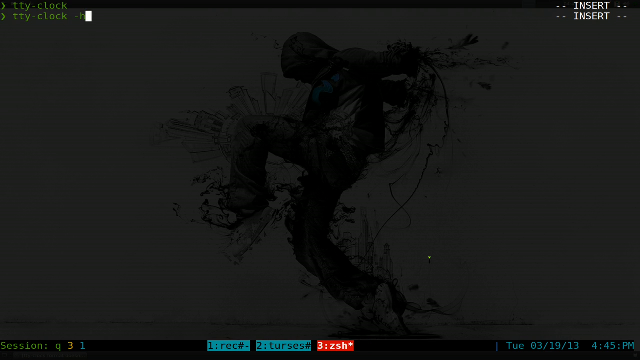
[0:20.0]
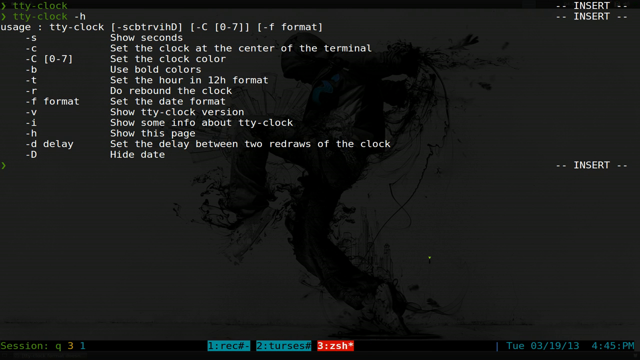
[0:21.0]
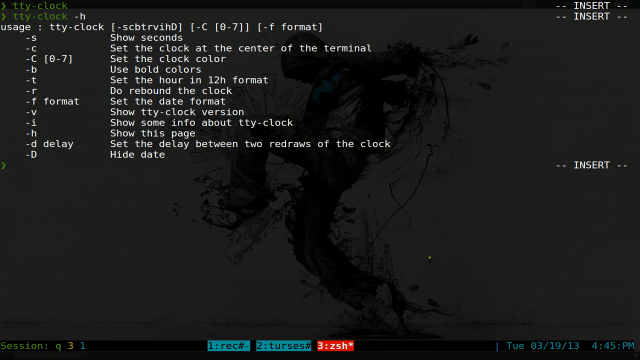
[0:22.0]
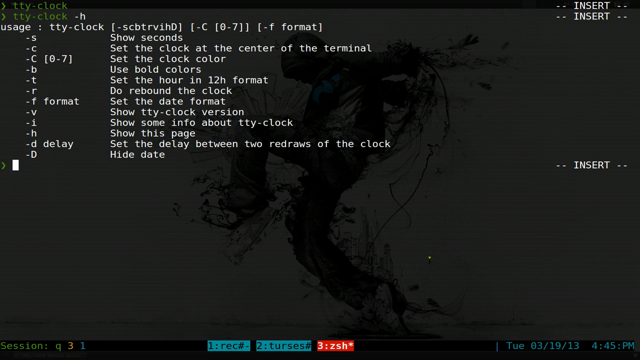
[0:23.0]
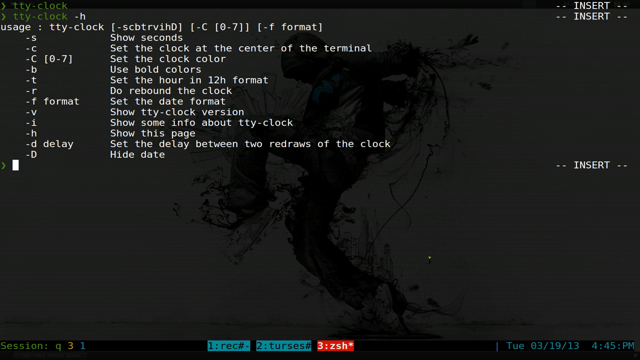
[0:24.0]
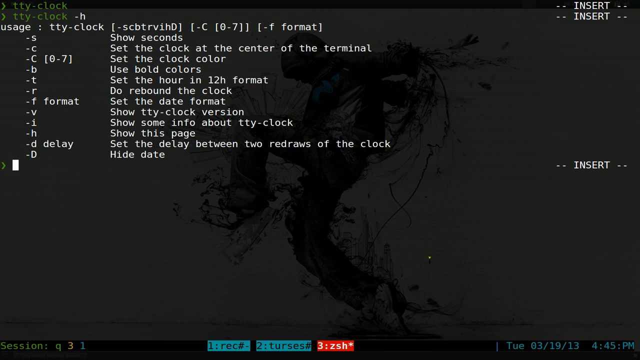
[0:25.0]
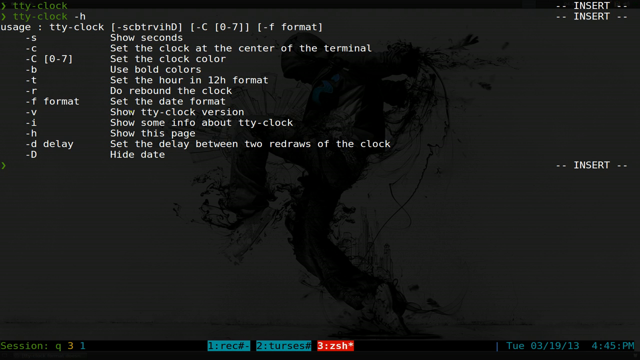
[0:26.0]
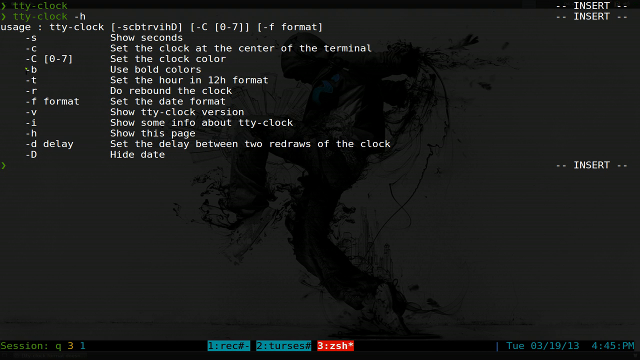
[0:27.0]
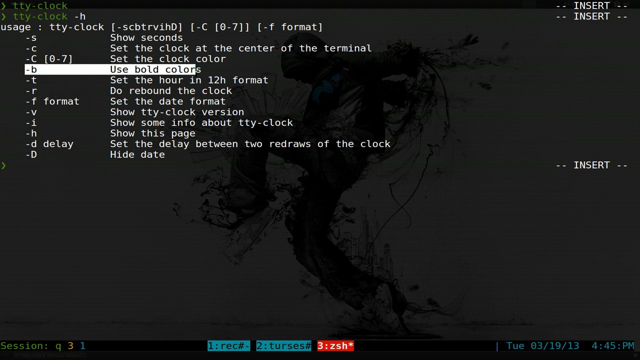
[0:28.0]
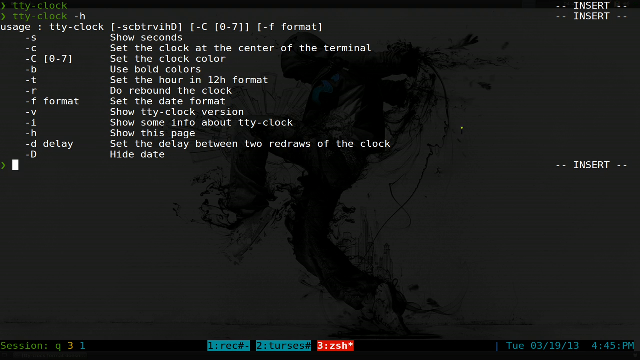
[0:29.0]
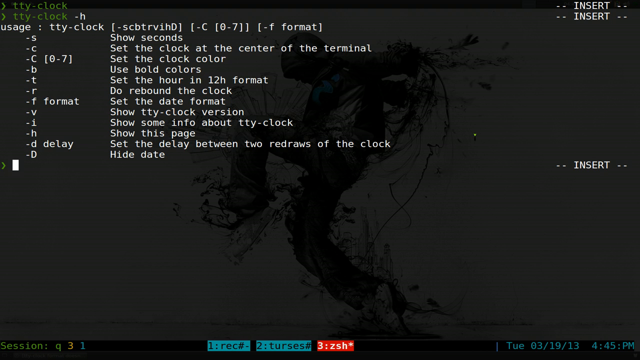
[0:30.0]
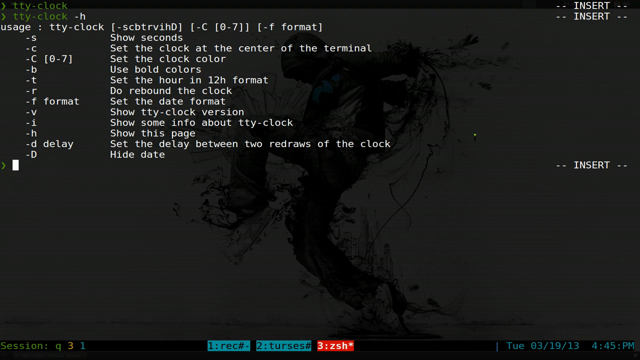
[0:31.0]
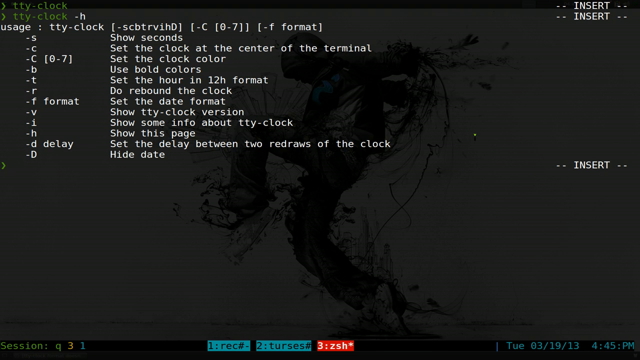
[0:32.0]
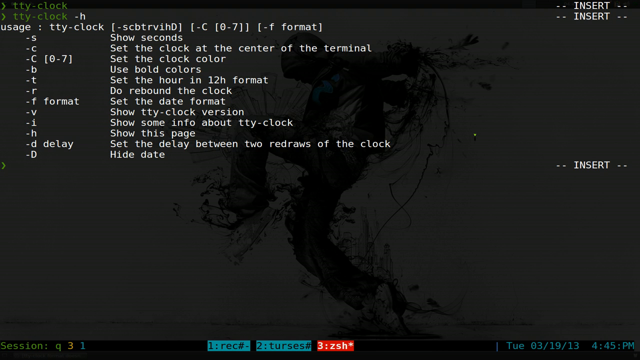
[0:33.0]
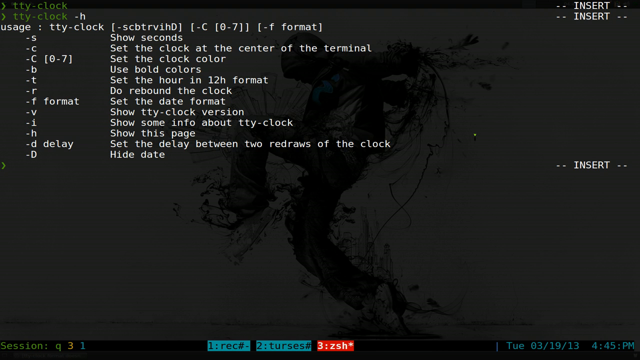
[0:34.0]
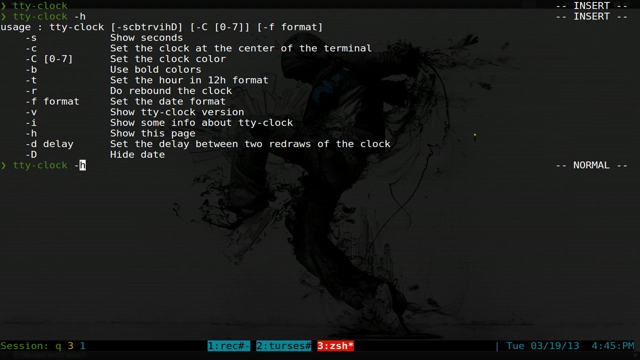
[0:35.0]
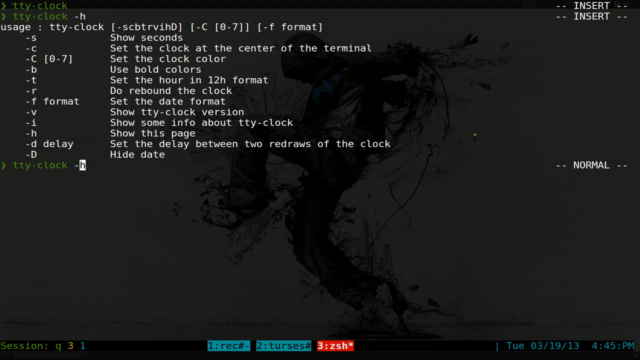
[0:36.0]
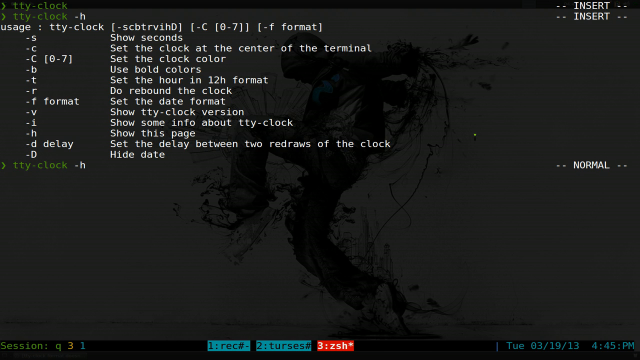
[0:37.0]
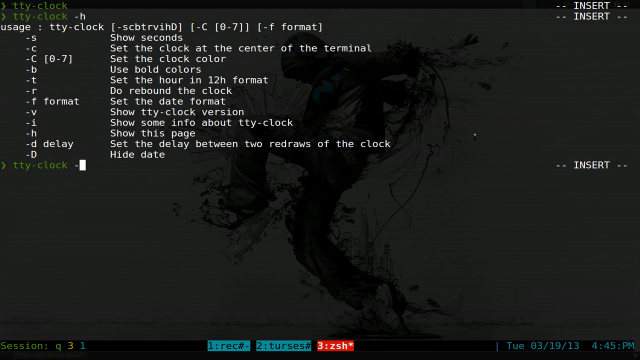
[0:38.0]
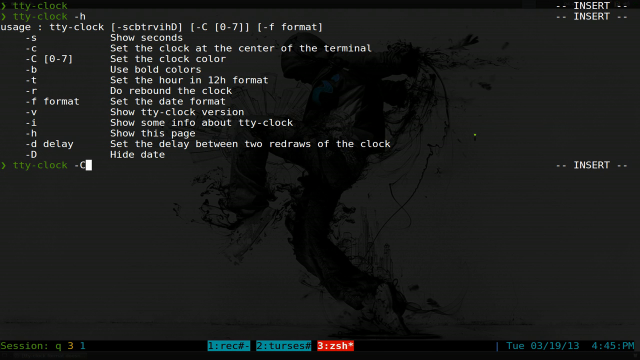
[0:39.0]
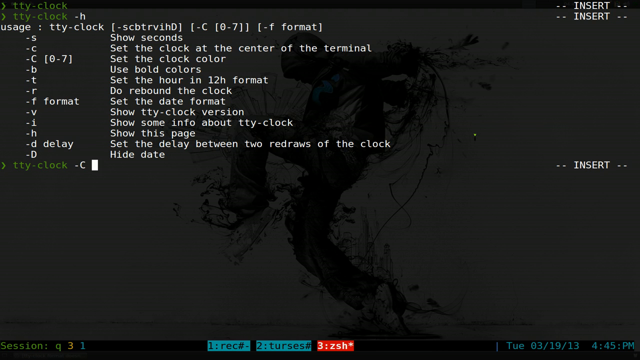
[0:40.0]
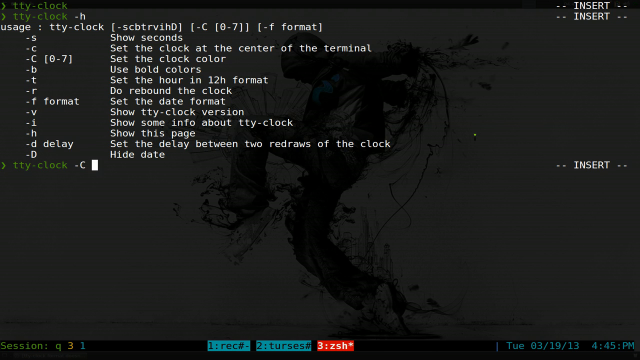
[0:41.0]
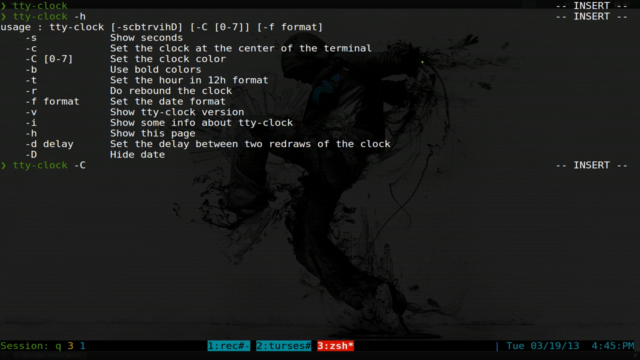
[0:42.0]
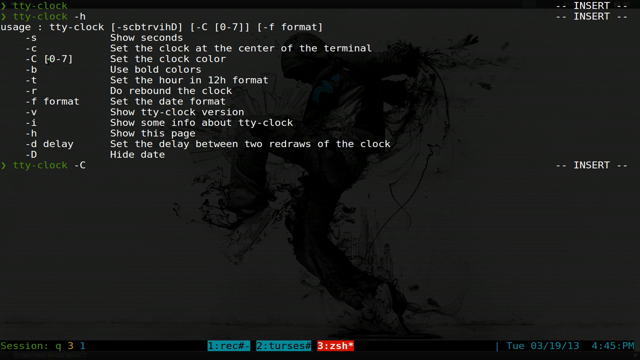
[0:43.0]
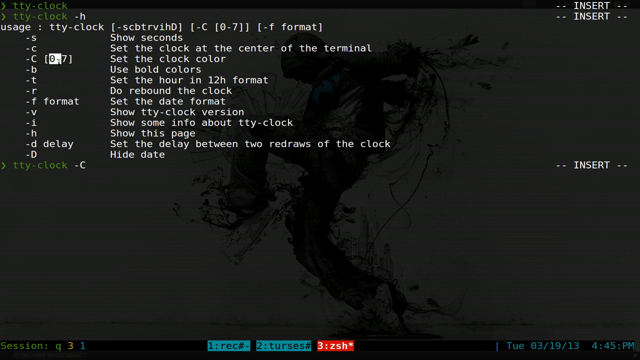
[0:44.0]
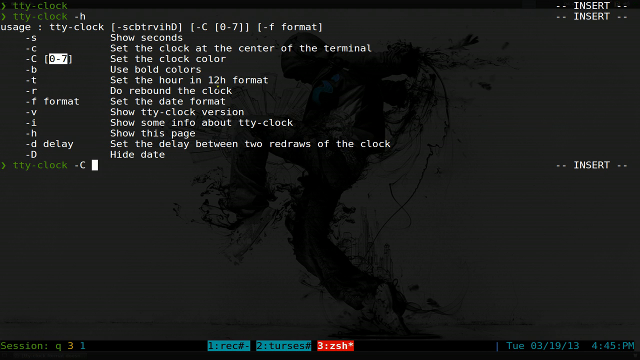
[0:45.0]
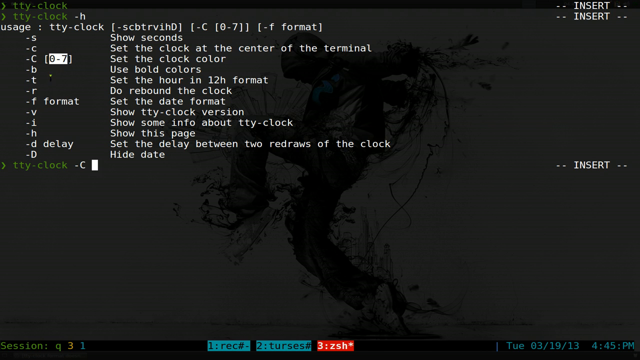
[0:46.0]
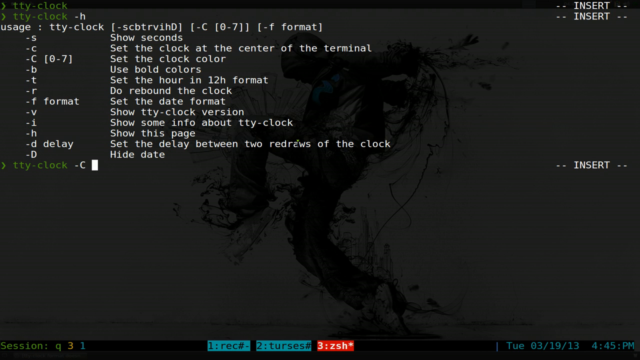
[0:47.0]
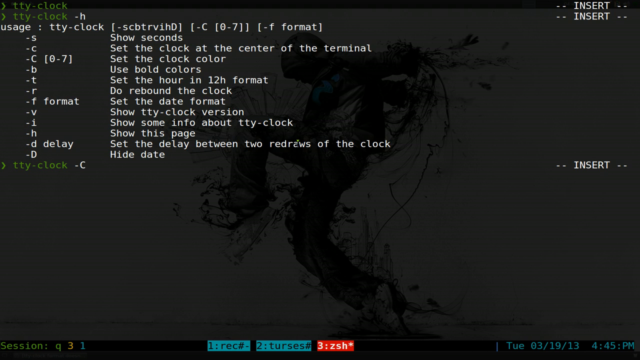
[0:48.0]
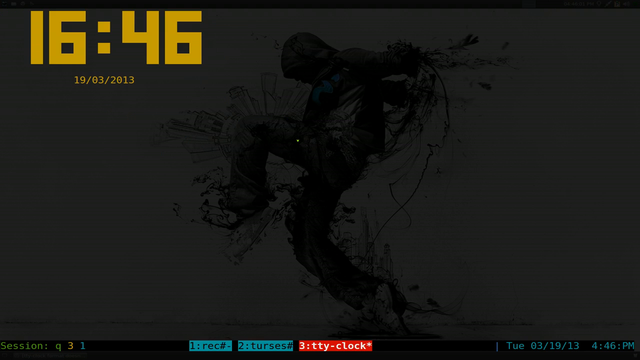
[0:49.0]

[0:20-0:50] A command line screen of a computer operating system shows the command "tty.clock" written in the upper left, followed by "tty.clock -h". Below it is the response in white text, which says "usage: tty.clock" and lists the command's different usage formats in about 10 rows. The cursor blinks on the black background as if waiting for another command. One of the rows above is highlighted and selected: the row that says "-b use bold color". The cursor blinks again, and the user types "tty.clock -c". The console blinks as if waiting for another command. At the bottom of the screen, some data is highlighted in green and red, and in the upper right corner the word "insert" appears twice.